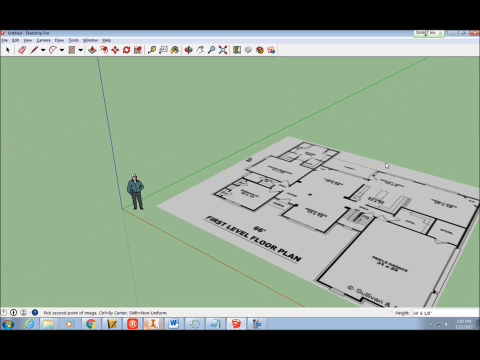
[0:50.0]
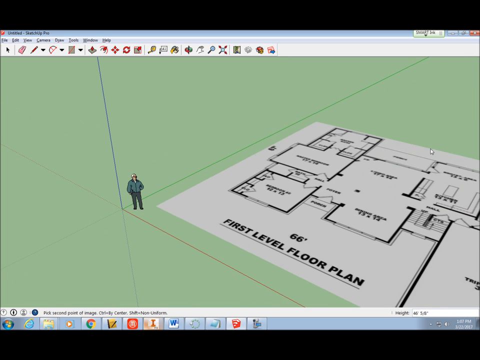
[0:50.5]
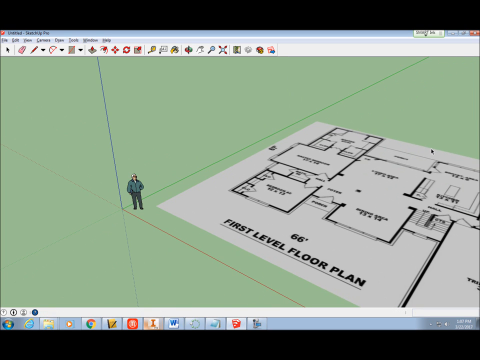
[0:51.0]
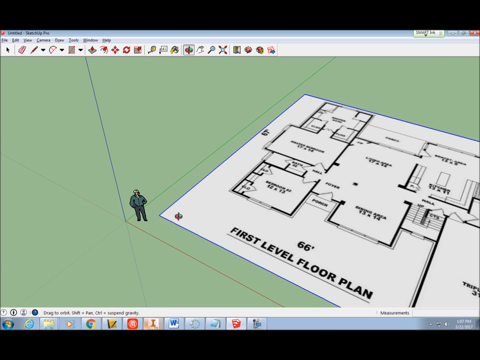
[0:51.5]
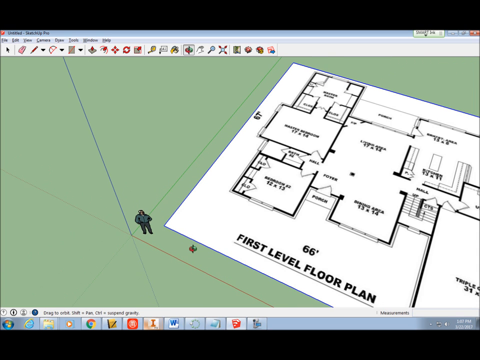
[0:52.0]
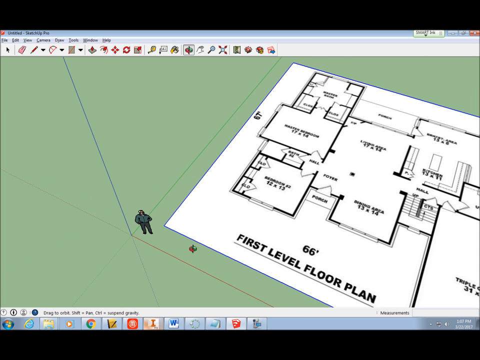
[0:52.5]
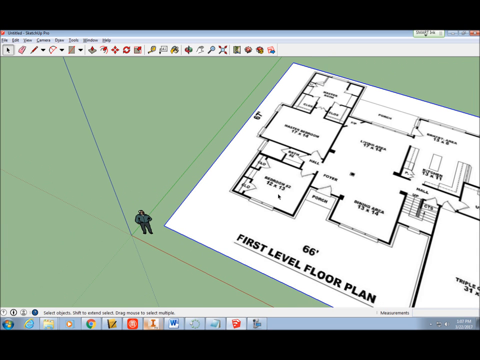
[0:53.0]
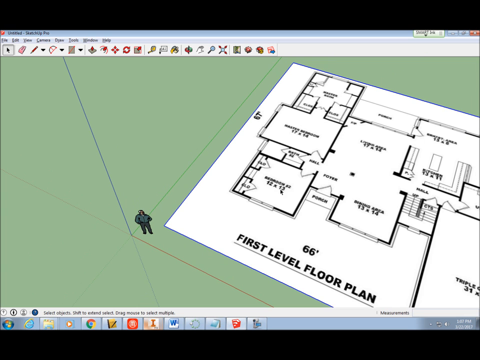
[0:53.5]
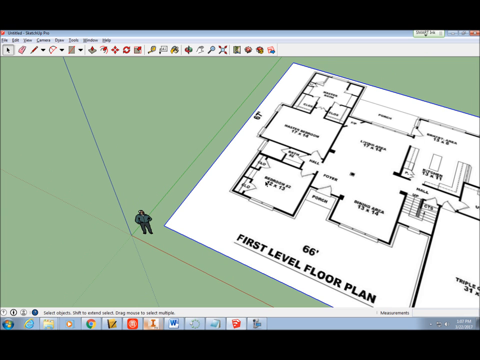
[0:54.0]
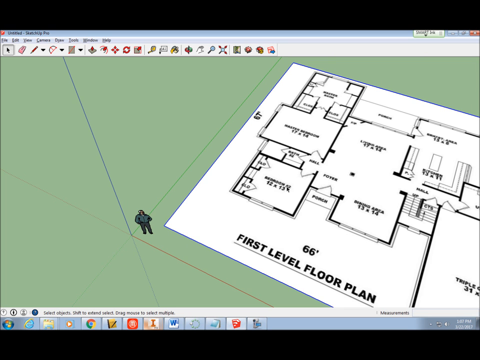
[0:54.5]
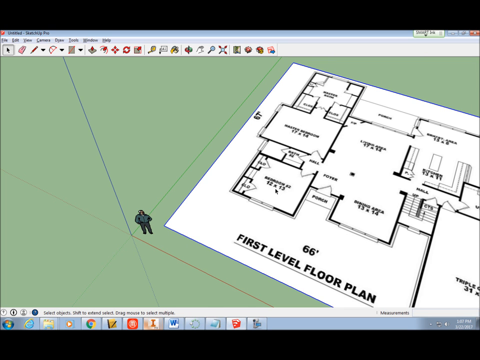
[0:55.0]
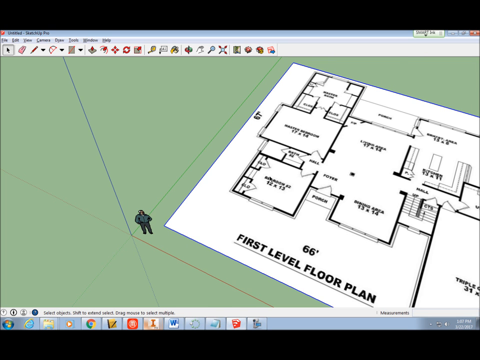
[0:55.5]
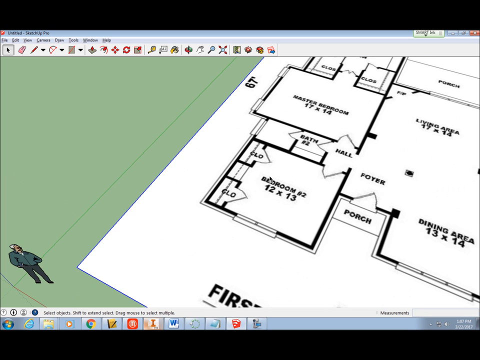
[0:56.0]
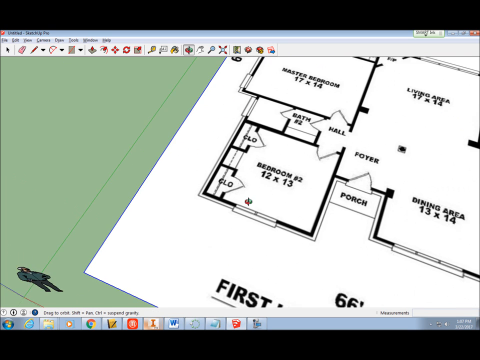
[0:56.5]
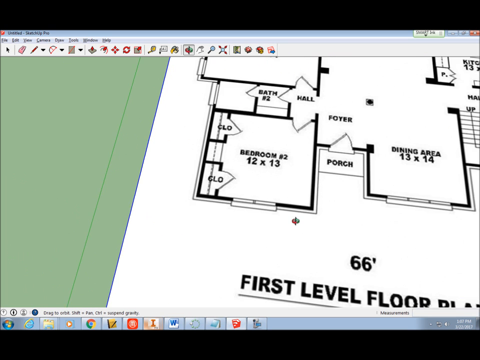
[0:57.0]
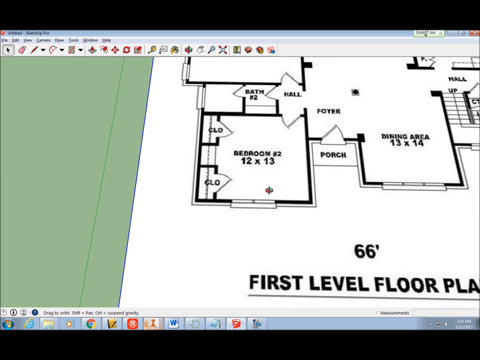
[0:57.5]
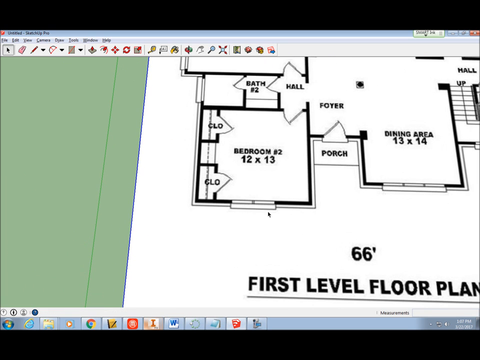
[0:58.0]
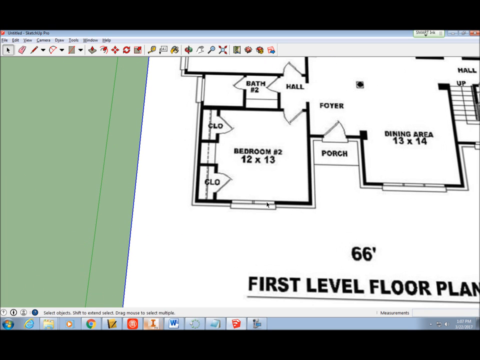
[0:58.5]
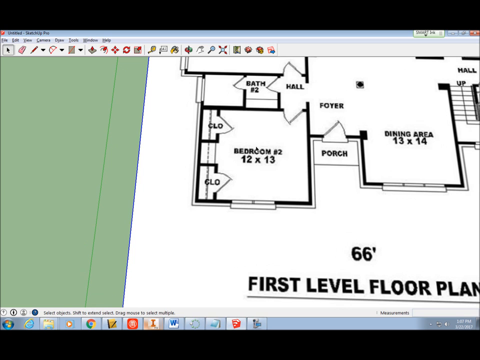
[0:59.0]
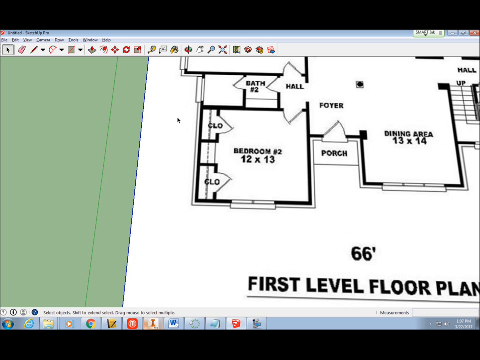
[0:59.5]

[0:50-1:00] The floor plan is apparently now posted on the page. It shows bedroom number two, which is 12 by 13, the bath, the hall, the foyer, the porch and the dining area. It is named the first level floor plan and has a dimension of 67 inches by 66 inches. The user keeps hovering the mouse cursor and enlarging the image, trying to get a good perspective of it. Some other information on the plan is not clear.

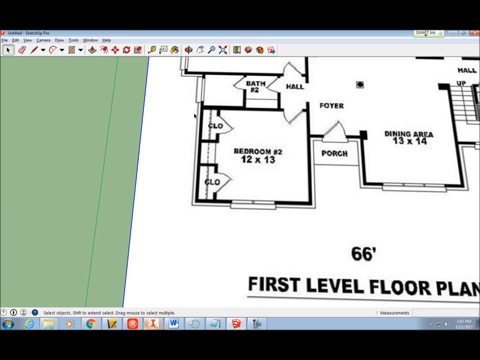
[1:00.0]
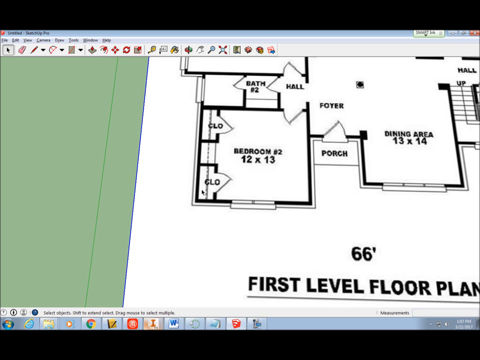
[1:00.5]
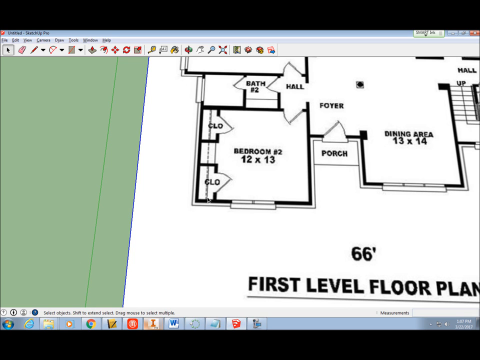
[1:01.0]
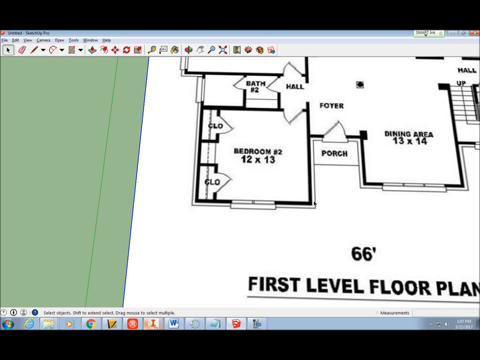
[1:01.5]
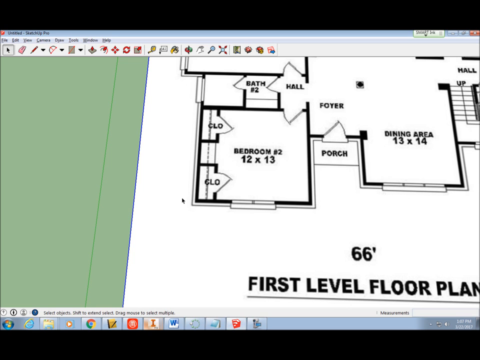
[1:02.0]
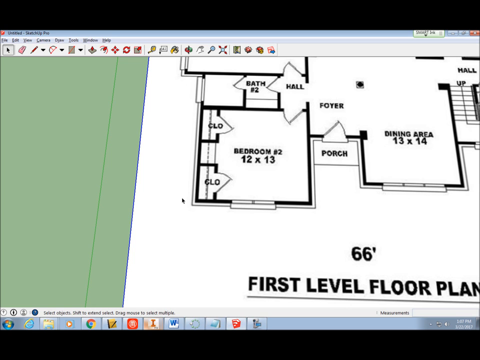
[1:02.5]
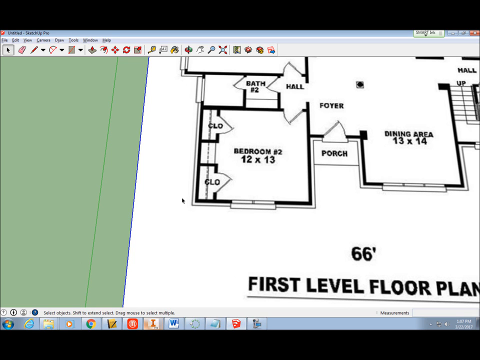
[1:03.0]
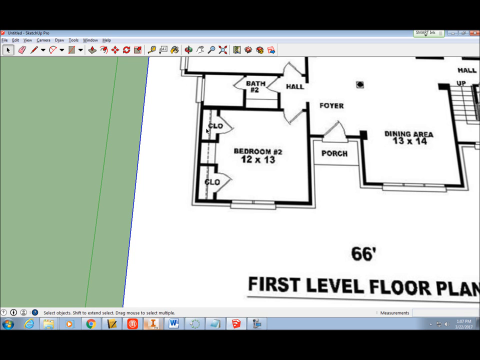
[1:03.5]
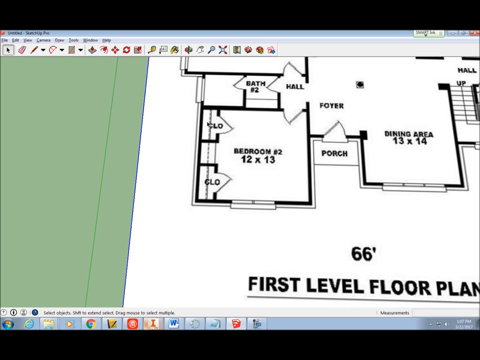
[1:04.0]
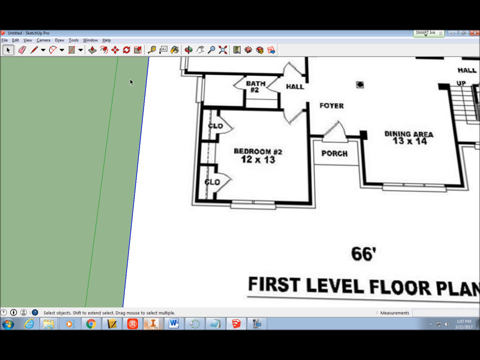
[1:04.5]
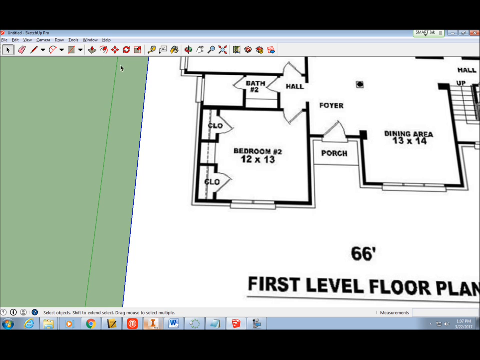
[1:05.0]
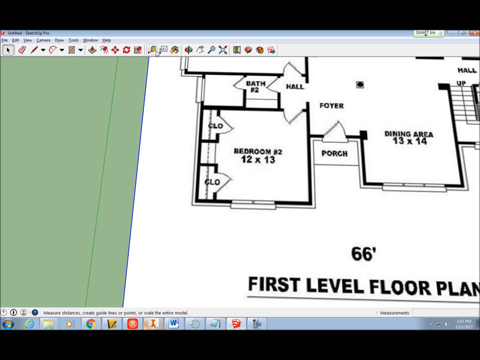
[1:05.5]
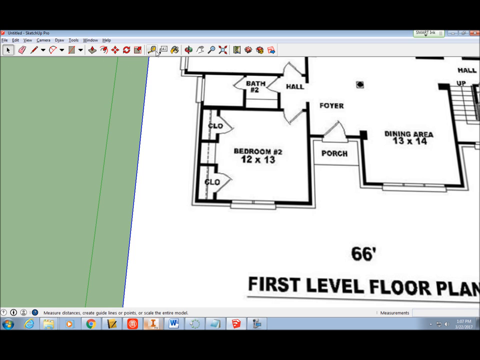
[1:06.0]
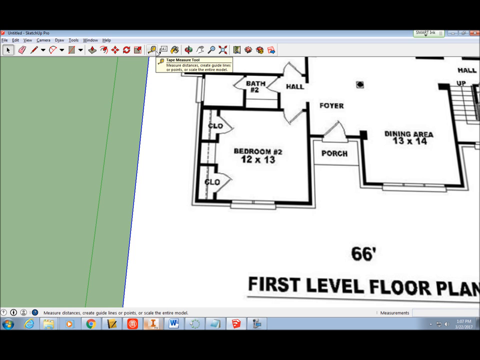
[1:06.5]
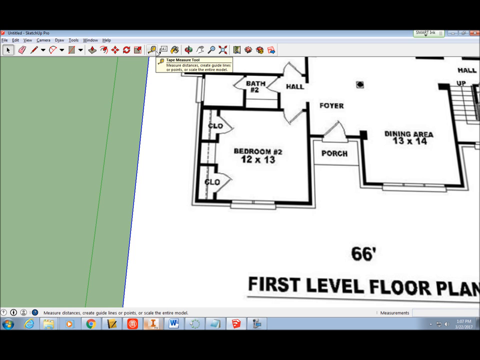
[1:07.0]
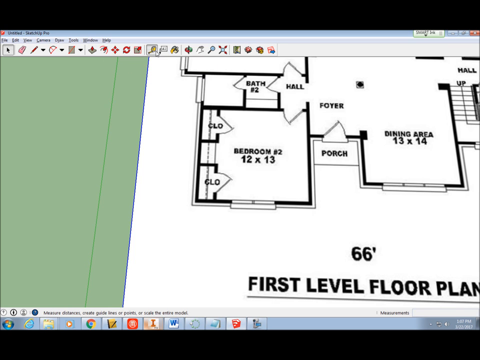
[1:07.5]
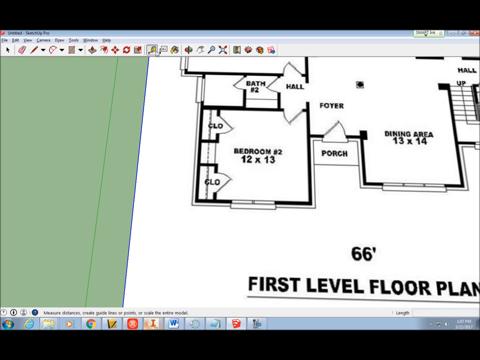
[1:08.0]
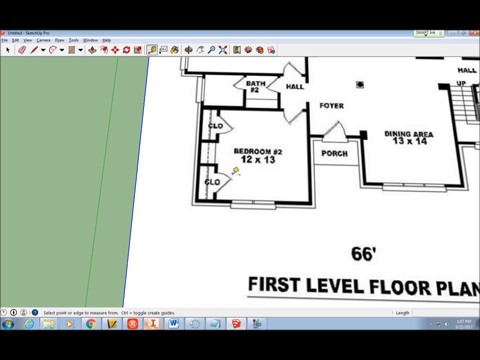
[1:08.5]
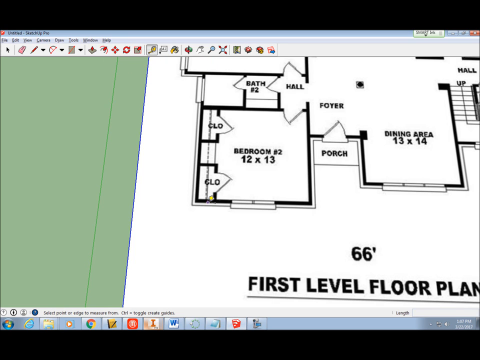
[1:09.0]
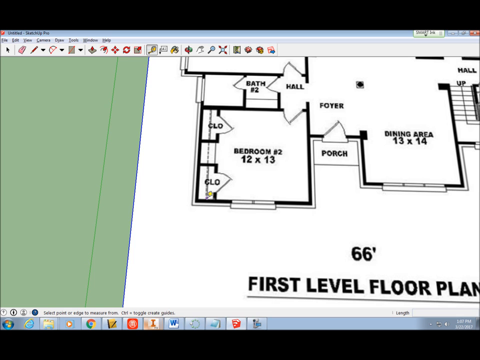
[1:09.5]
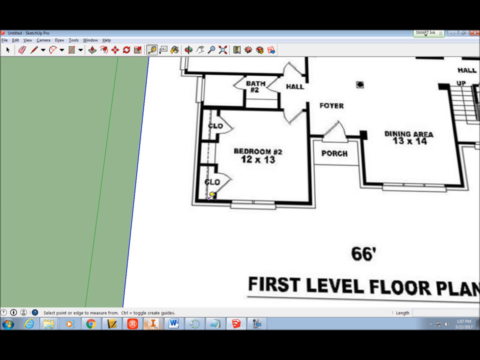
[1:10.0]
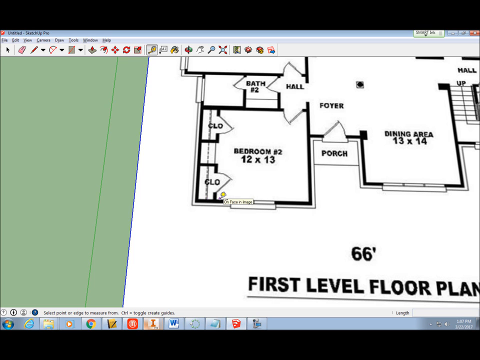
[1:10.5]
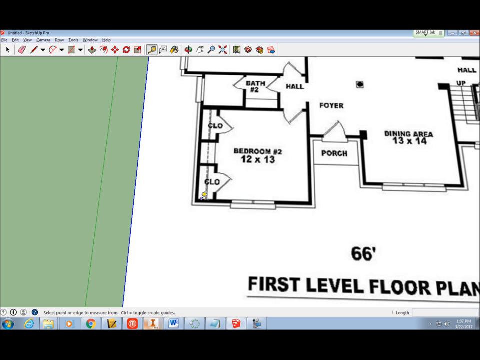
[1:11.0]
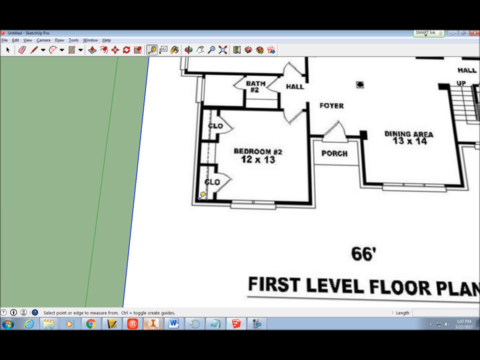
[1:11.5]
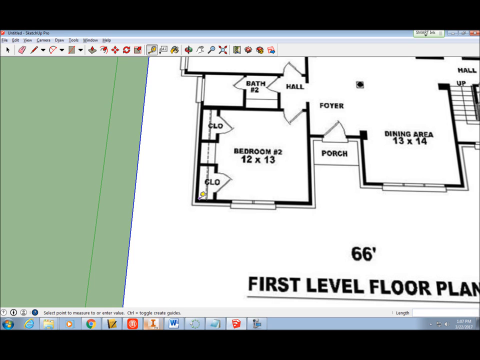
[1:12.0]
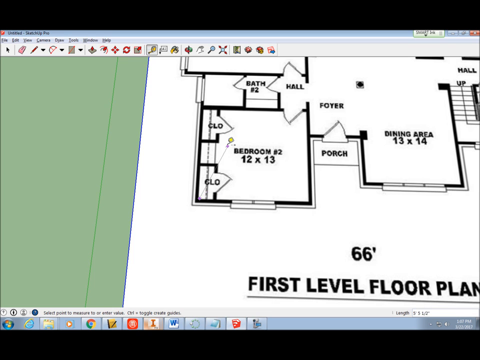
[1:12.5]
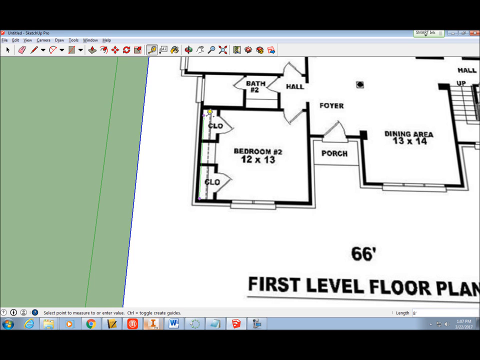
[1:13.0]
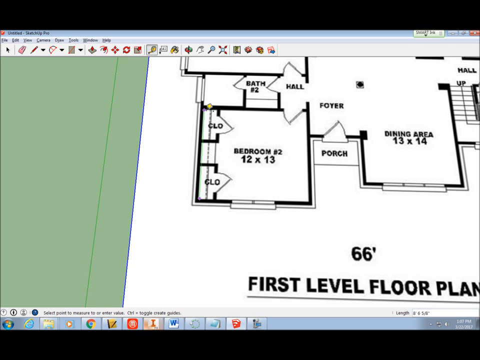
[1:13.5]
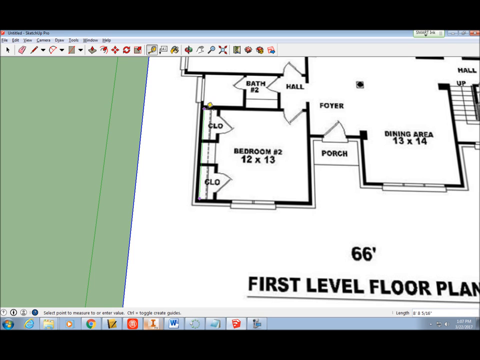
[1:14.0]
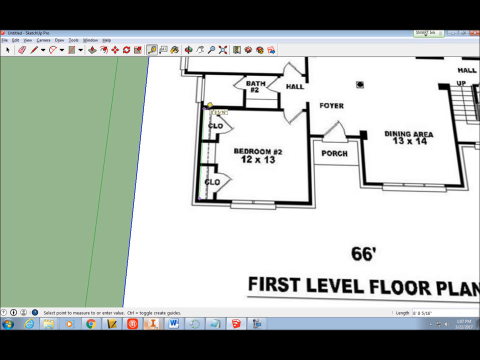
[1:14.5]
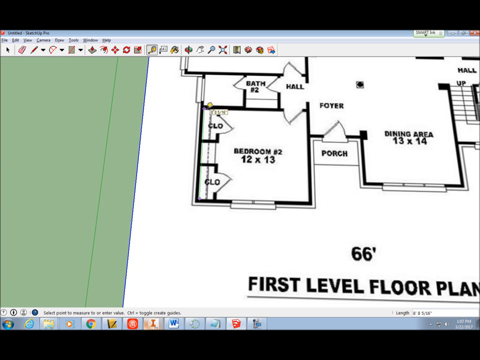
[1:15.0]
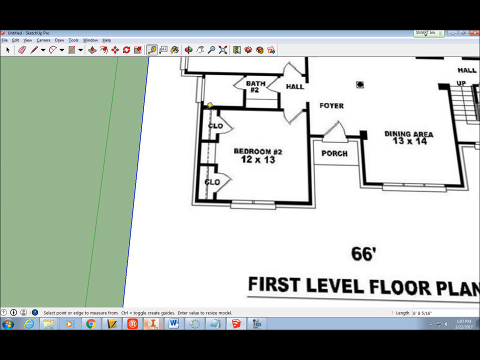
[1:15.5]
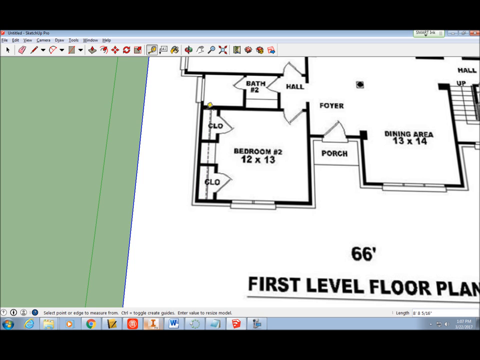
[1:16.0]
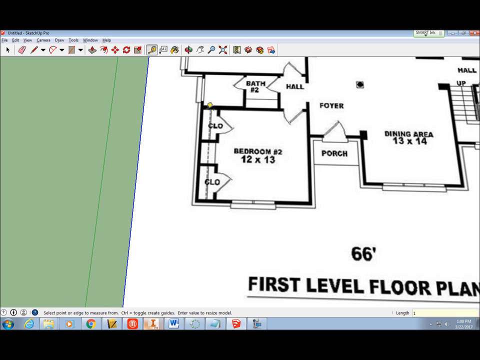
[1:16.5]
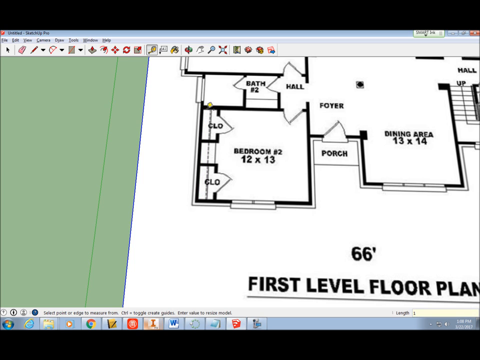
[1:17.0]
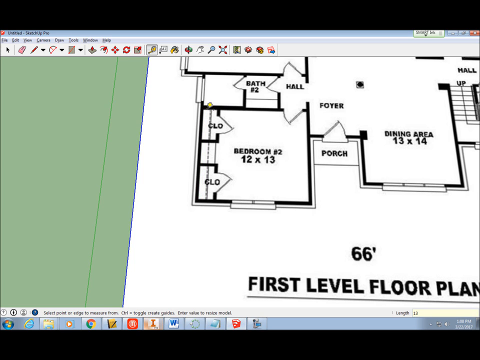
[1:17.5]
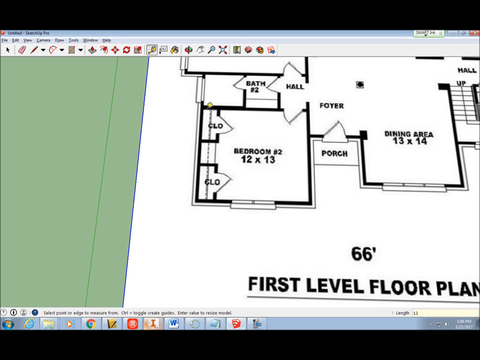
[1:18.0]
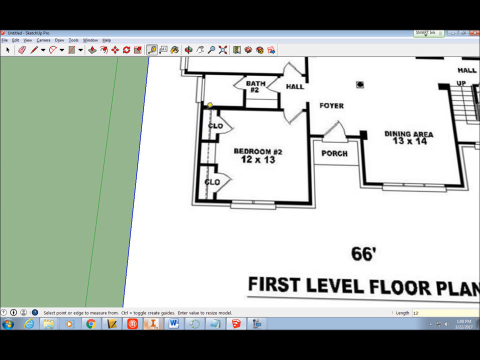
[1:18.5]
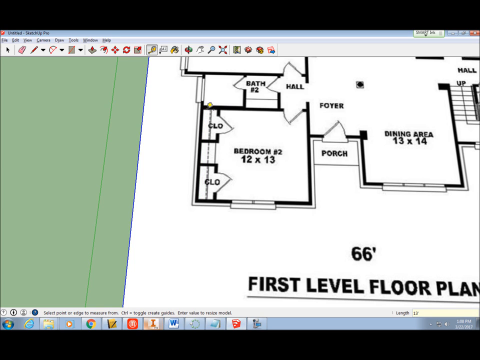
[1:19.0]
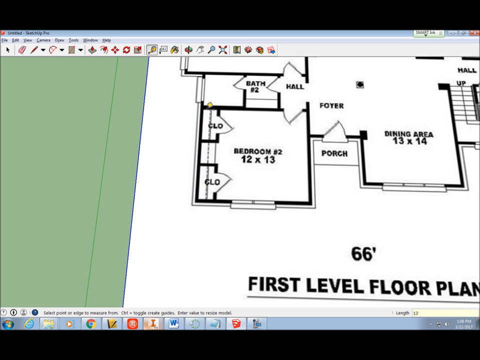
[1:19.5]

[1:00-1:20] The plan still shows bedroom number 2, which is 12 by 13, and bathroom 2. The user apparently works on the plan in an application, drawing some lines in the bedroom number two area. The application has tools including an eraser, a pen, a square and a tape measure. The user takes the tape measure and measures the distance from one end of the bedroom to the other; the exact measurements are not clear.